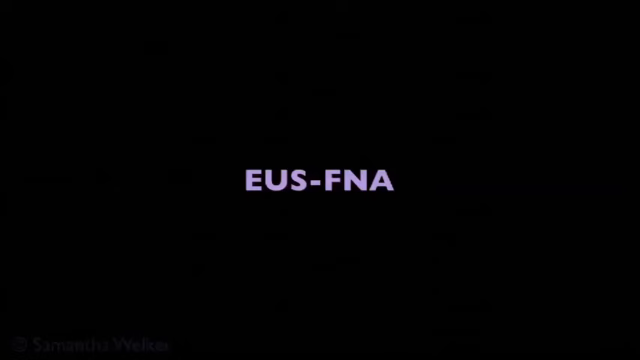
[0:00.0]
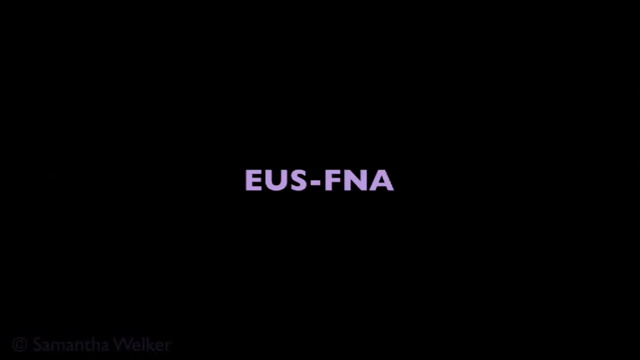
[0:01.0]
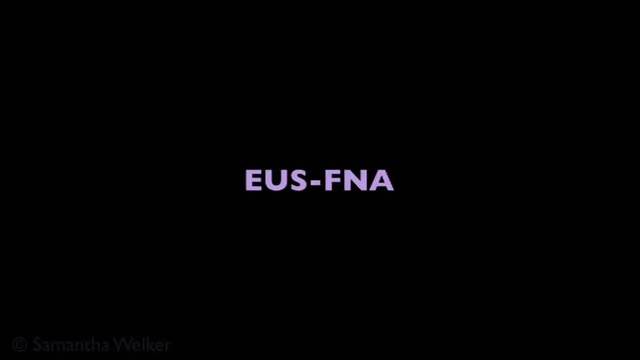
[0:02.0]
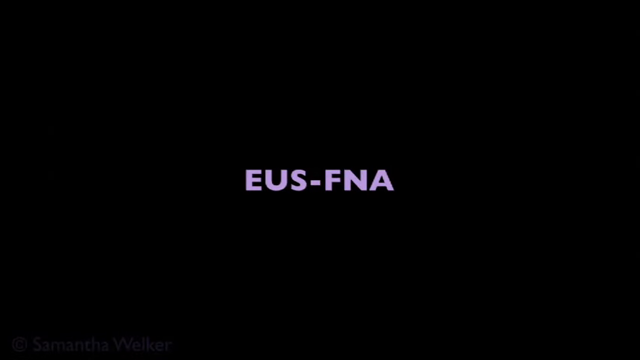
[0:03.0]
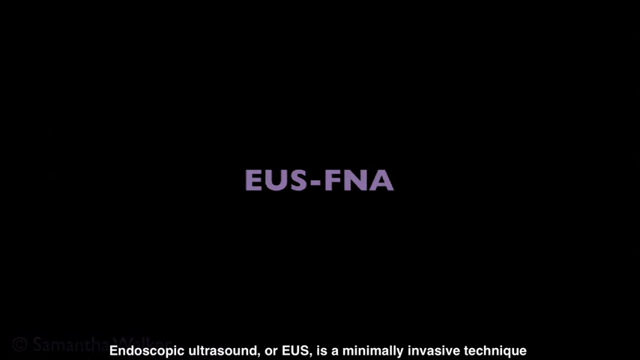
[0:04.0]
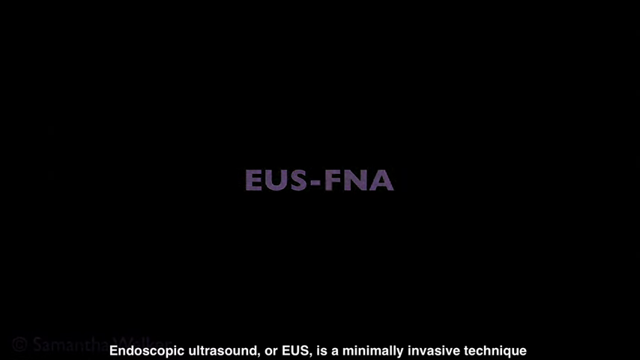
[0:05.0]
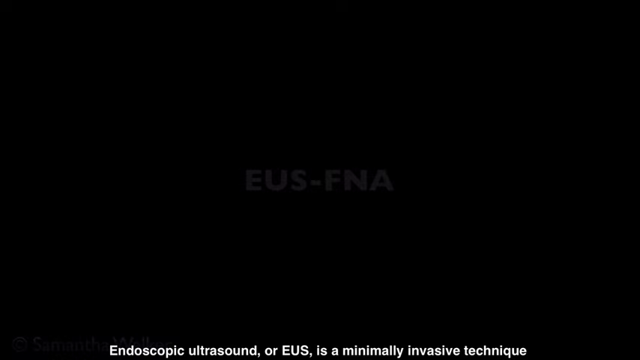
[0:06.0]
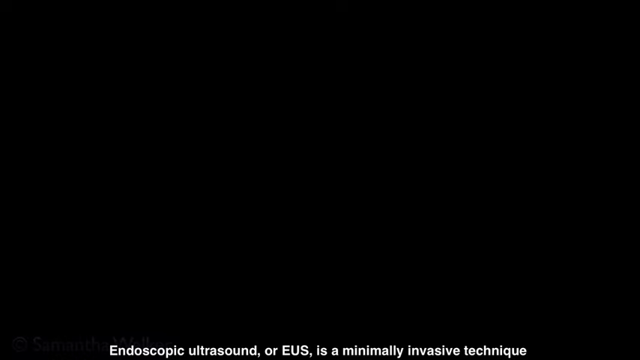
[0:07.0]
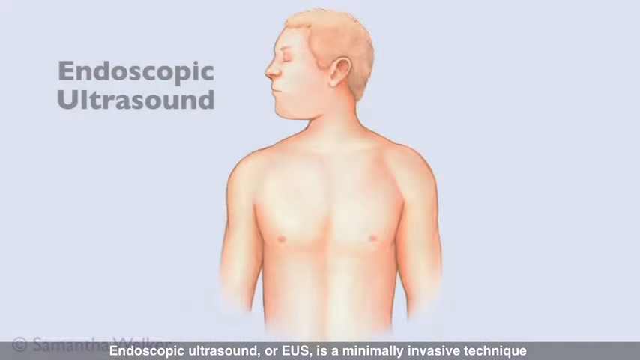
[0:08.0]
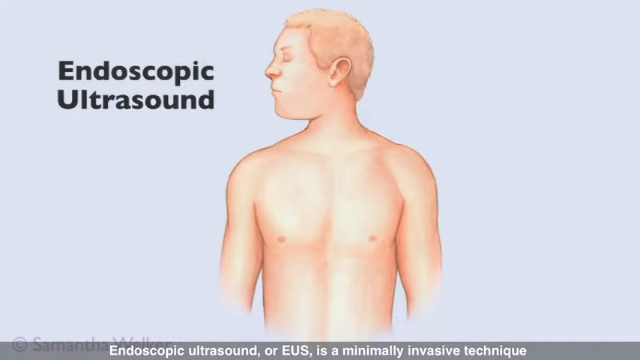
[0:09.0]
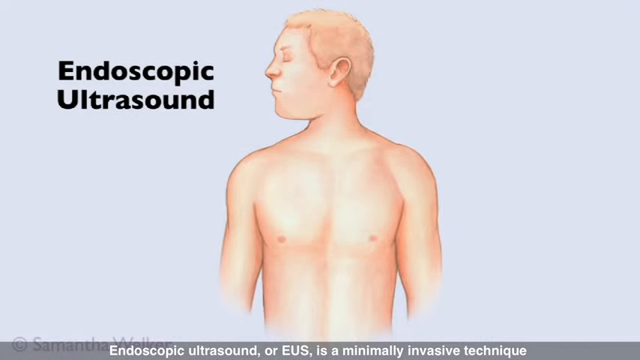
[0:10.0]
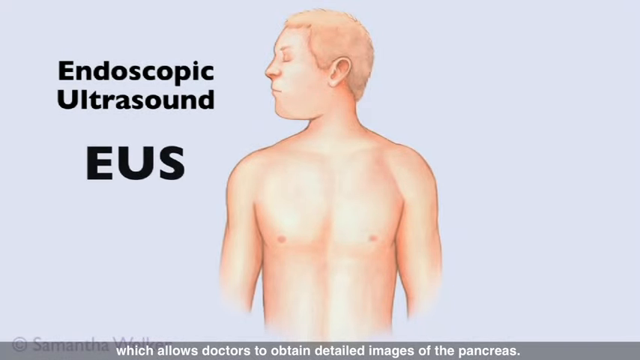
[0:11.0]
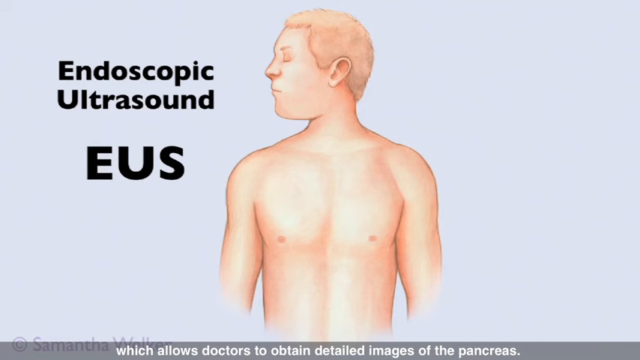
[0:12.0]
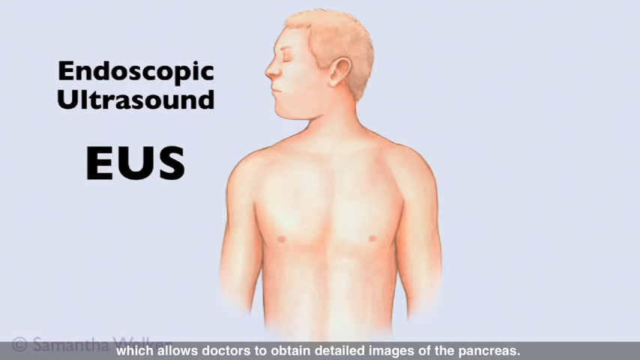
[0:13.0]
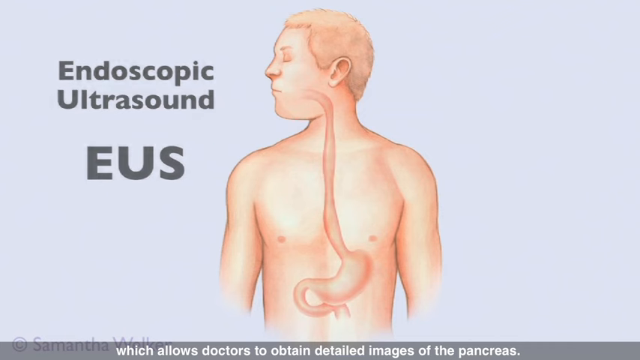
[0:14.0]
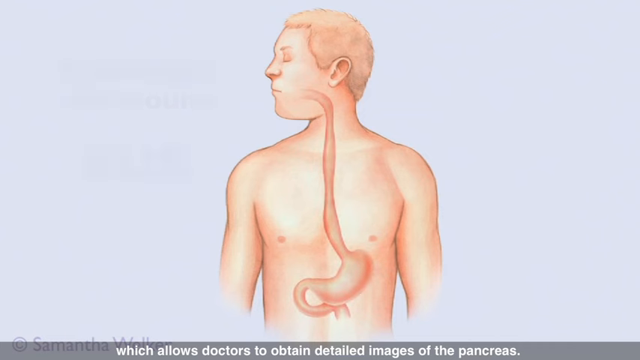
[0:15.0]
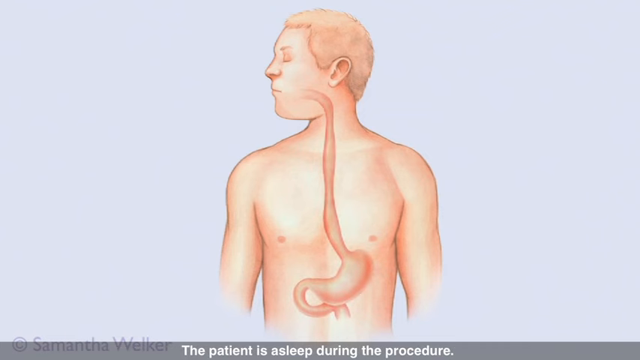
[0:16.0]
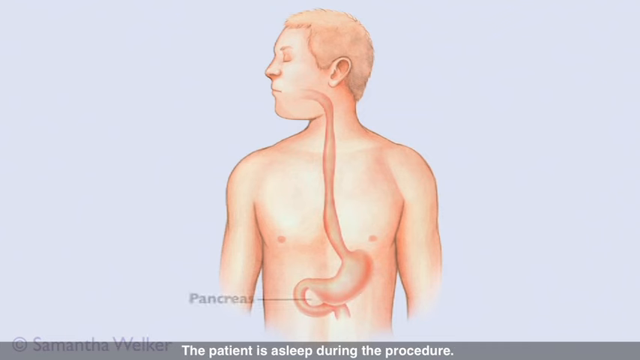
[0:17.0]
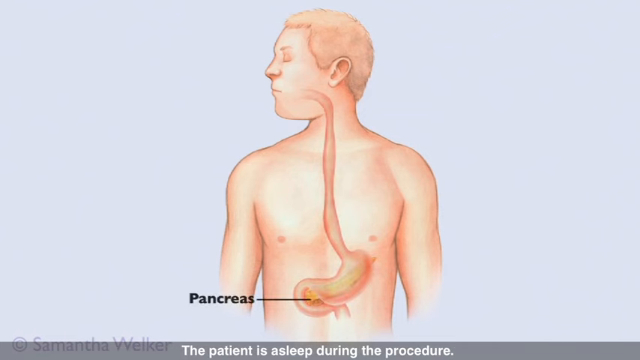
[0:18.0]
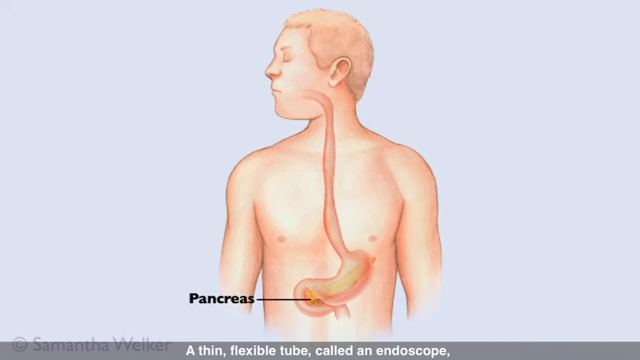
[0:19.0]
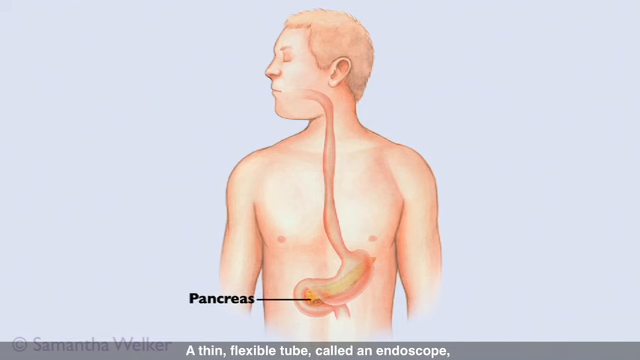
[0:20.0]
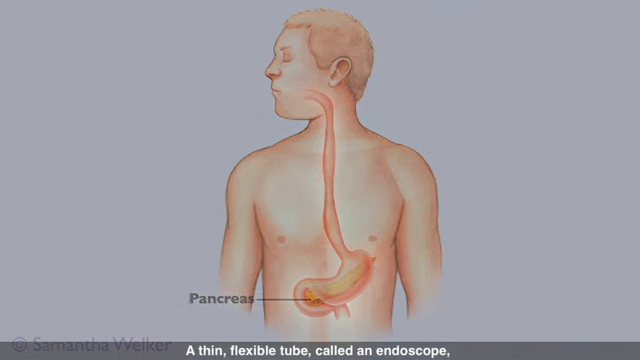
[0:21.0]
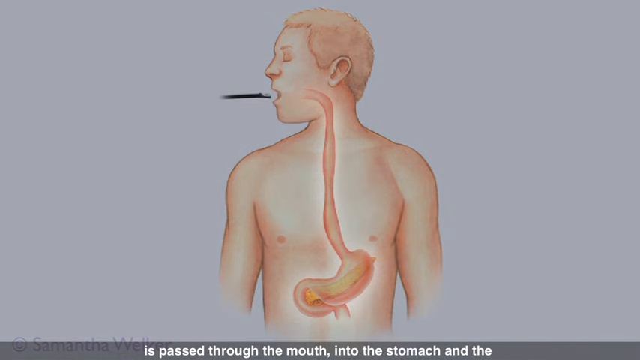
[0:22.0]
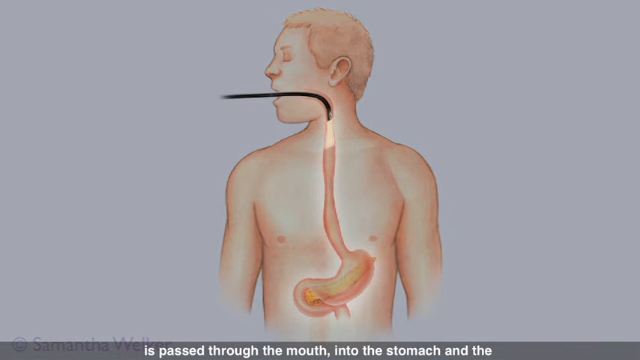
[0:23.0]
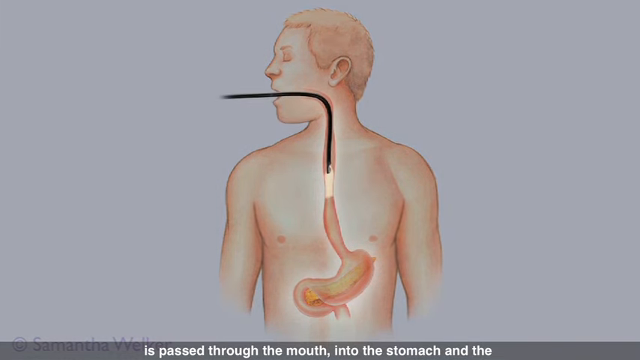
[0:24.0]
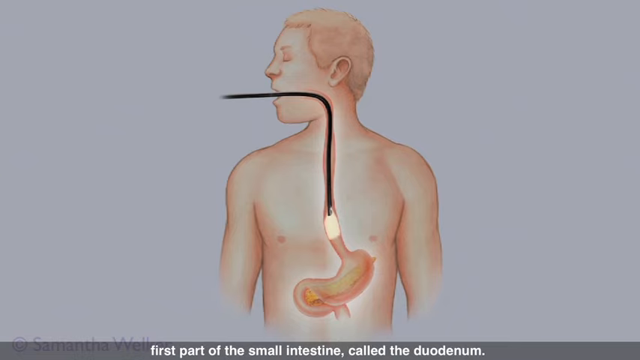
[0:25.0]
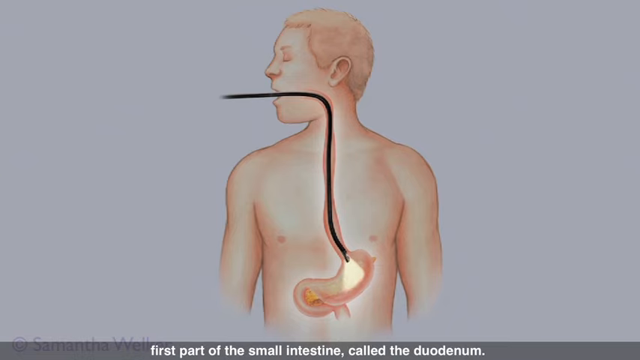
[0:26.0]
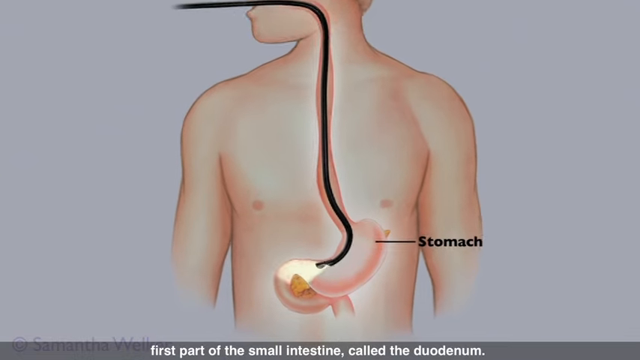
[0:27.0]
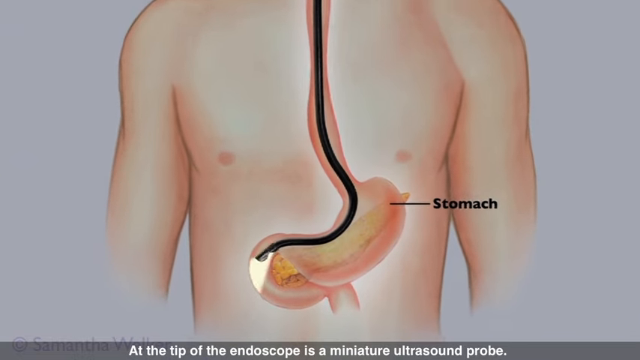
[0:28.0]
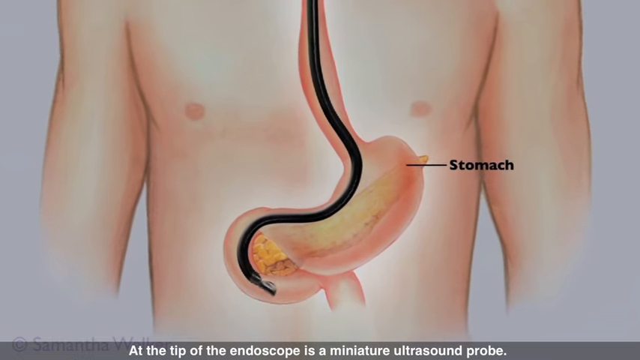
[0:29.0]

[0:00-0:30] The video begins with a black screen with the white words "EUS-FNA" in the middle. Toward the bottom of the screen, a drawing of a man appears. He is standing straight up with his head facing the left side of the screen, so his face is seen in profile. His arms are down at his sides, he has no shirt on, and he is shown from the top of his head down to his waist. The background is gray, and to the left of the man are the words "endoscopic ultrasound", with the letters "EUS" beneath them. The man's digestive tract then appears, starting in the middle of the cheek area and running down through his neck and throat and through his diaphragm to his stomach. The pancreas is pointed out near the stomach. The pancreas is yellow, the stomach is red, and the tract from his throat down to his stomach is reddish pink. Suddenly the endoscope goes down the man's throat. It enters through his mouth, goes down through his diaphragm and through the trachea until it reaches his stomach, then curves around to the left of the stomach and underneath it, where it ends.